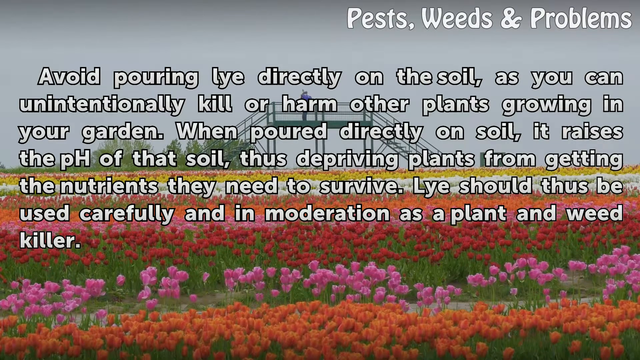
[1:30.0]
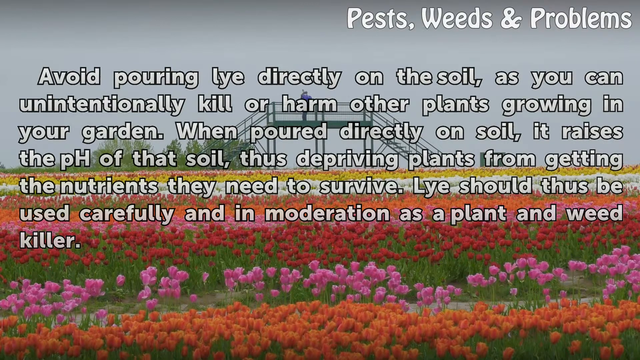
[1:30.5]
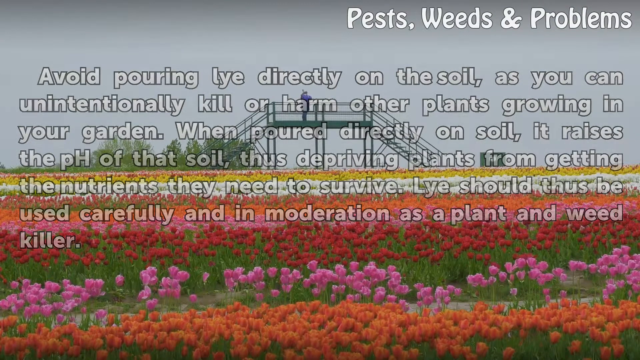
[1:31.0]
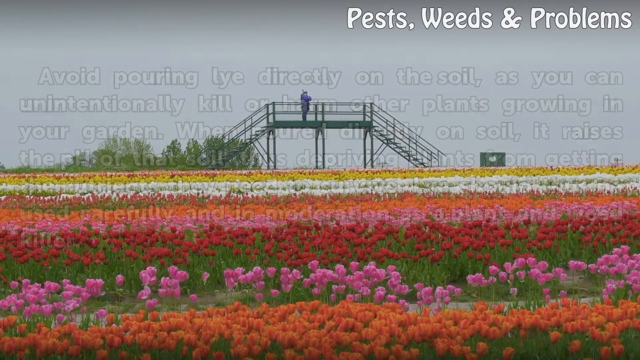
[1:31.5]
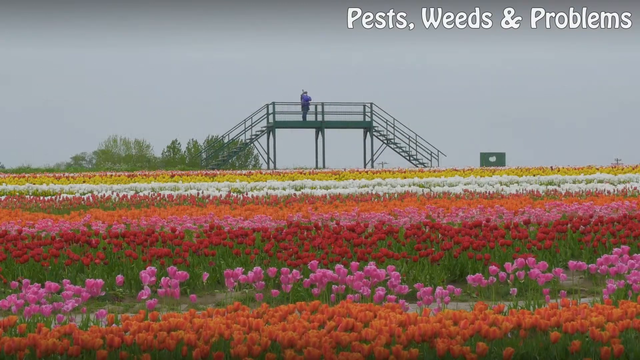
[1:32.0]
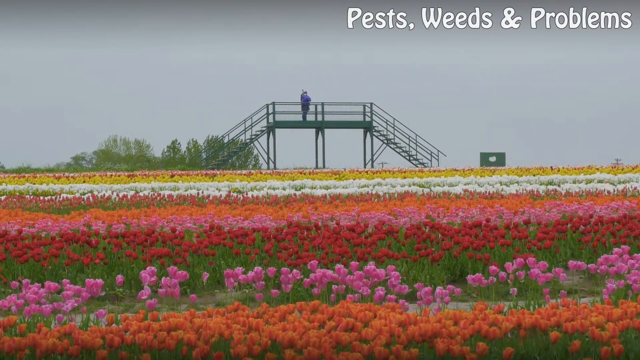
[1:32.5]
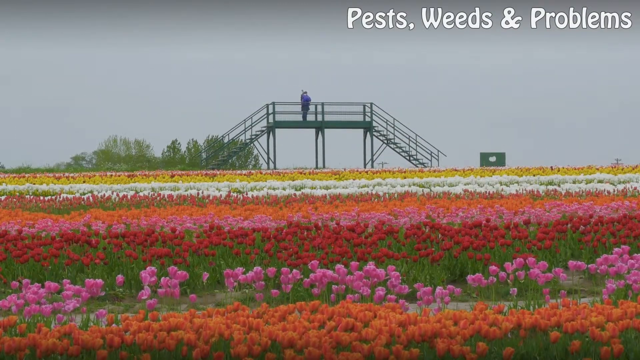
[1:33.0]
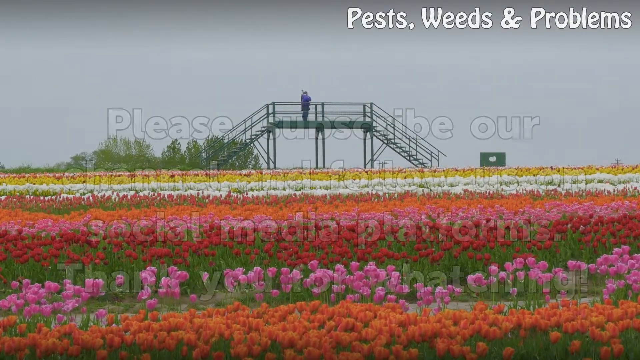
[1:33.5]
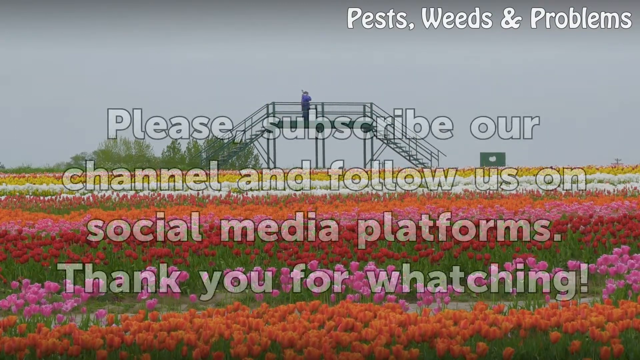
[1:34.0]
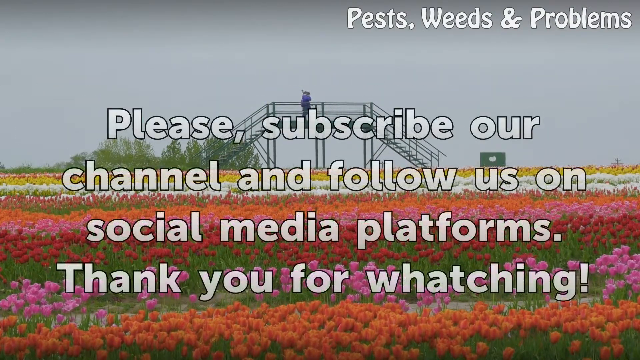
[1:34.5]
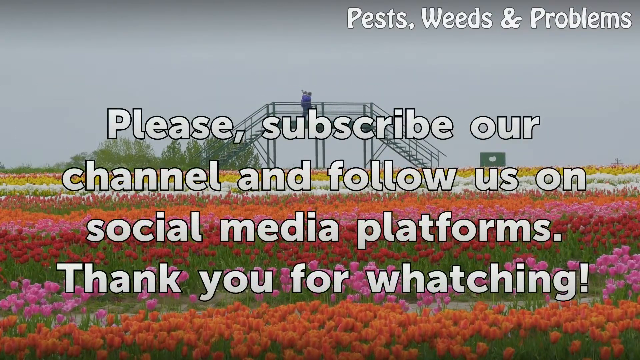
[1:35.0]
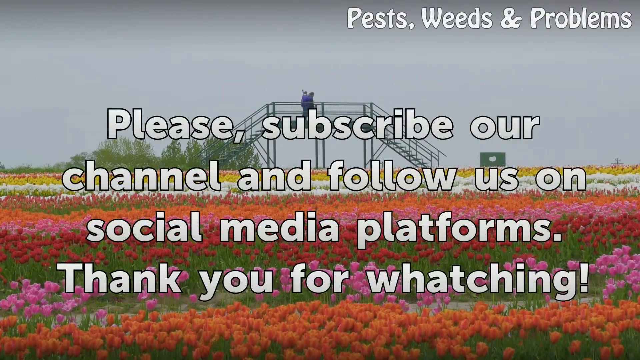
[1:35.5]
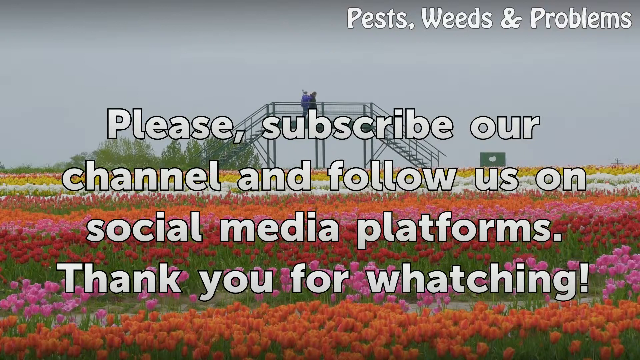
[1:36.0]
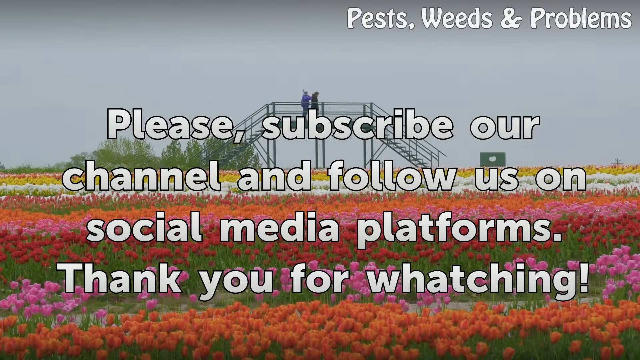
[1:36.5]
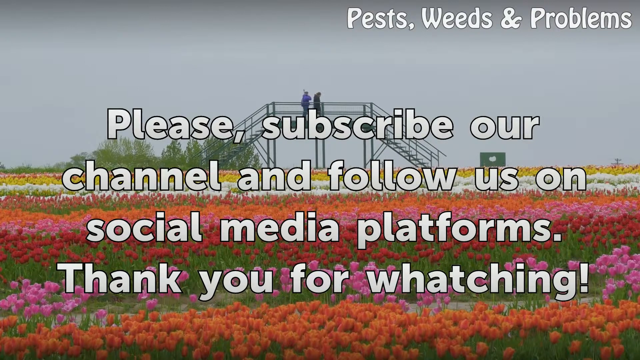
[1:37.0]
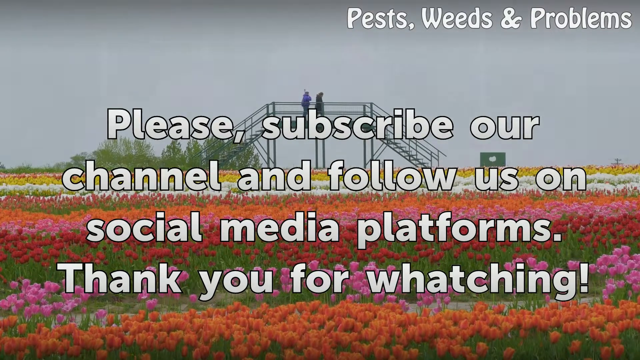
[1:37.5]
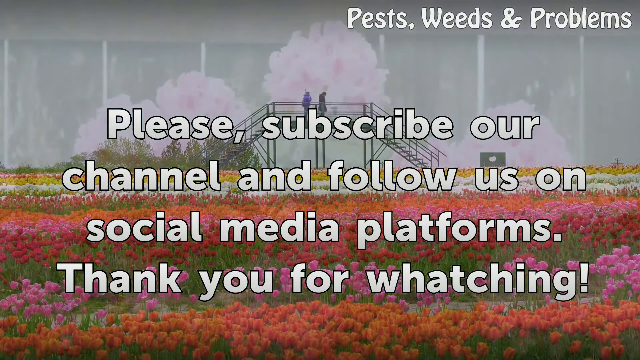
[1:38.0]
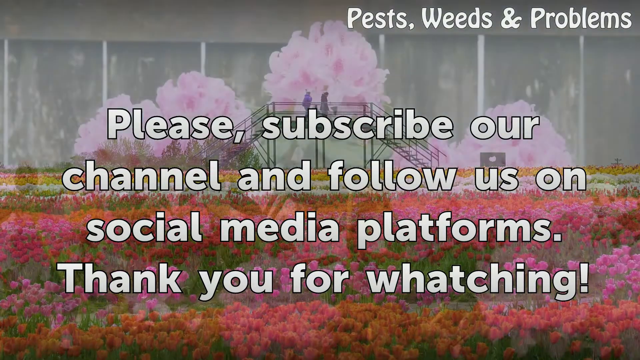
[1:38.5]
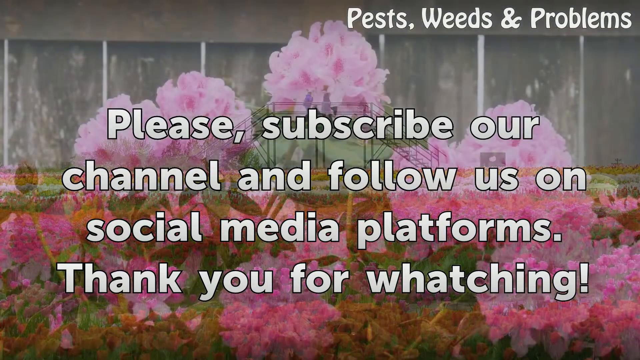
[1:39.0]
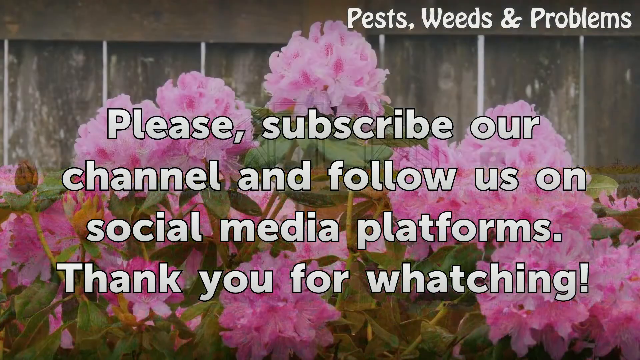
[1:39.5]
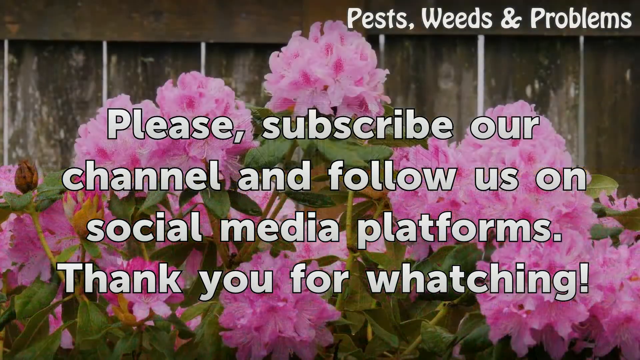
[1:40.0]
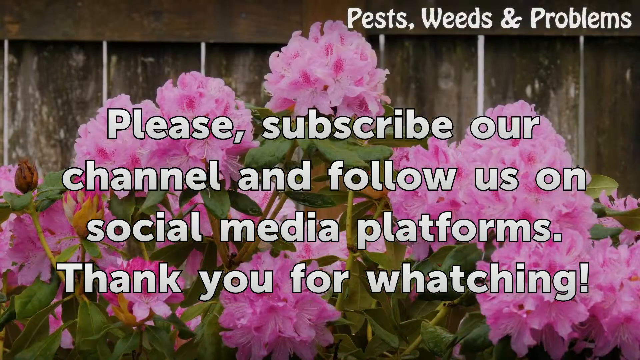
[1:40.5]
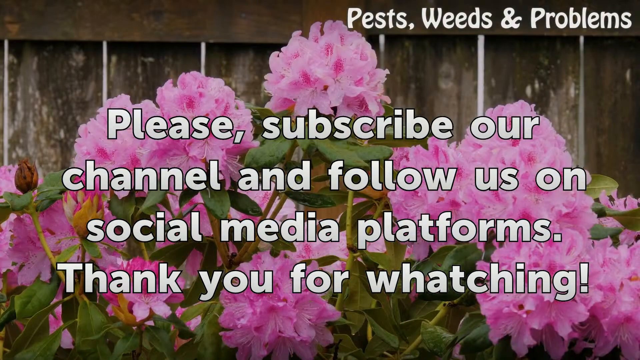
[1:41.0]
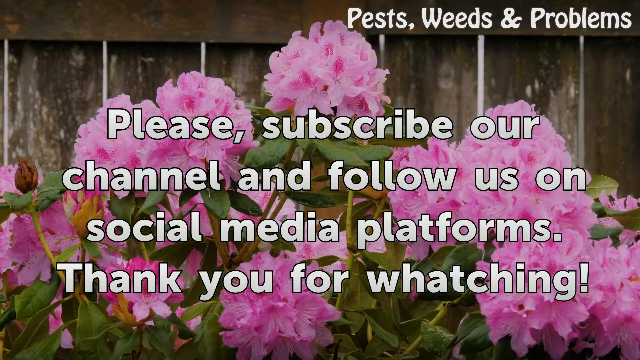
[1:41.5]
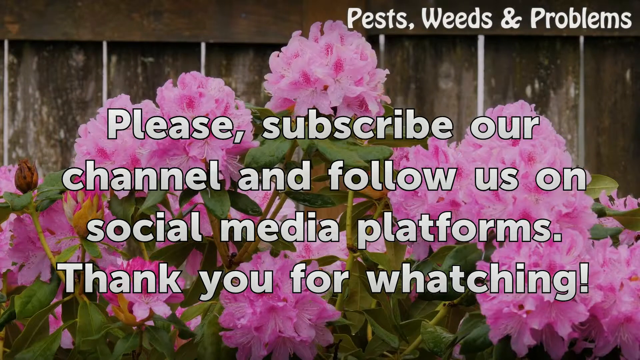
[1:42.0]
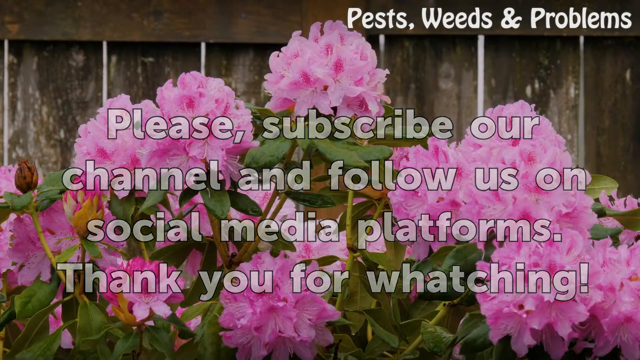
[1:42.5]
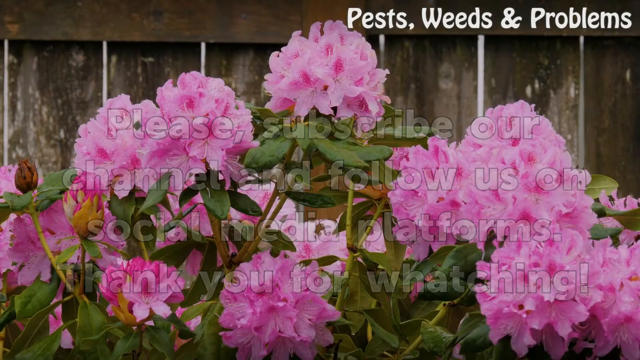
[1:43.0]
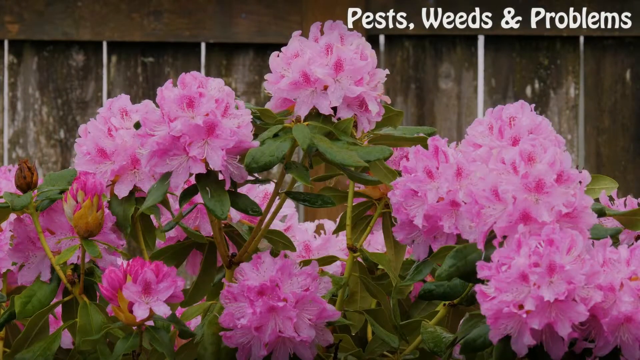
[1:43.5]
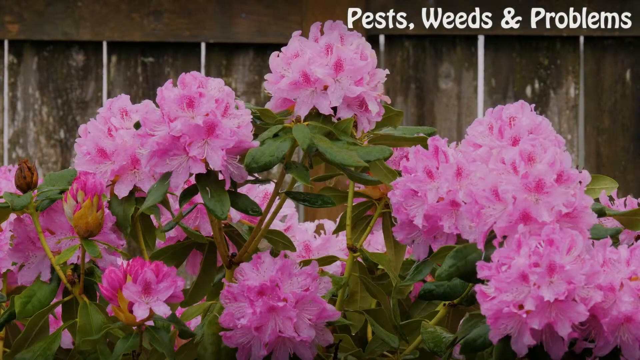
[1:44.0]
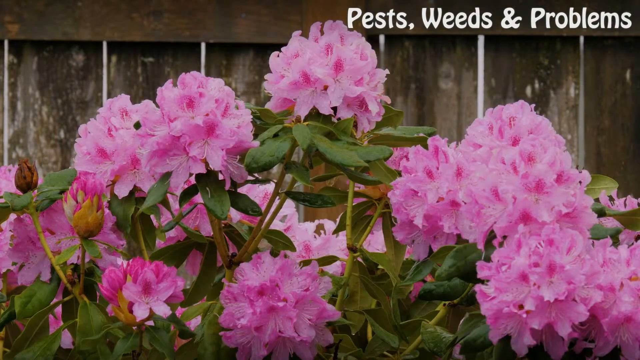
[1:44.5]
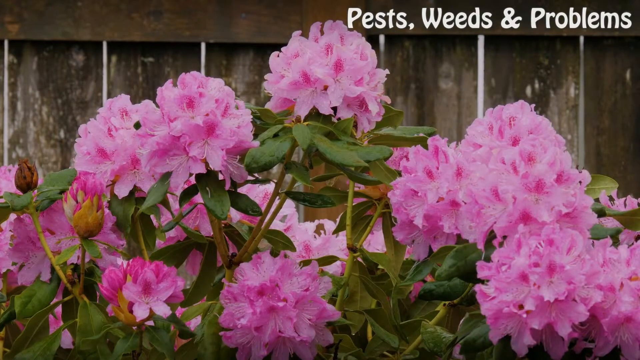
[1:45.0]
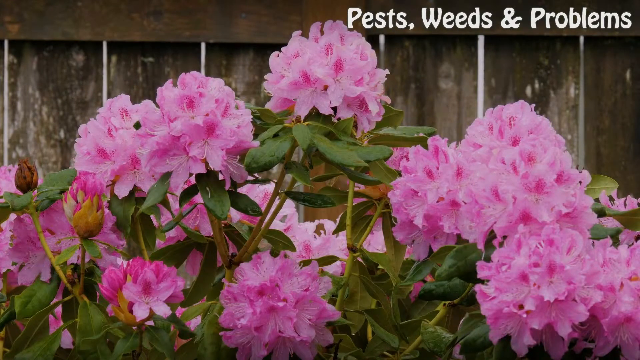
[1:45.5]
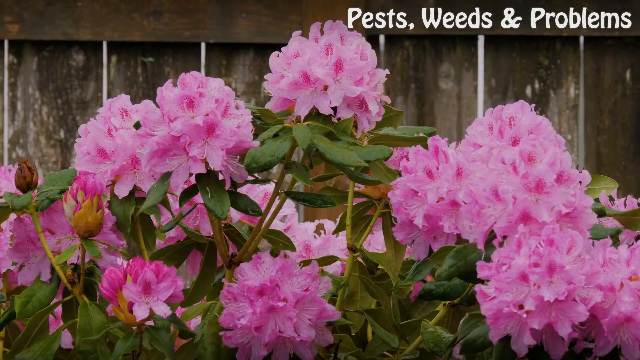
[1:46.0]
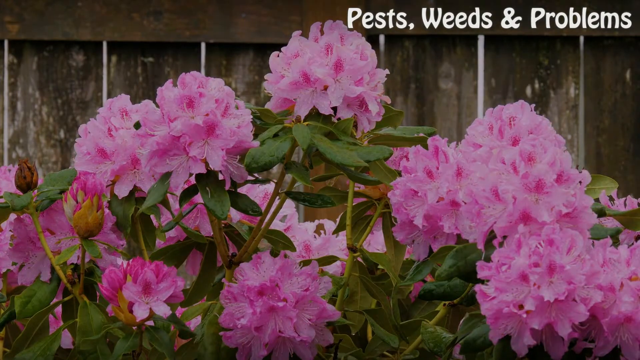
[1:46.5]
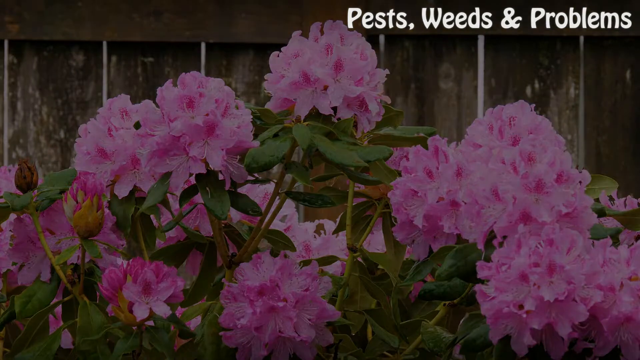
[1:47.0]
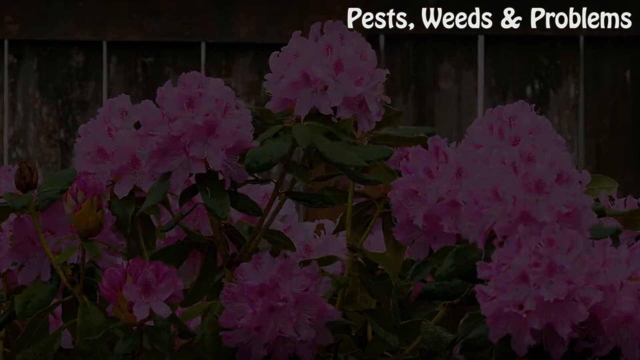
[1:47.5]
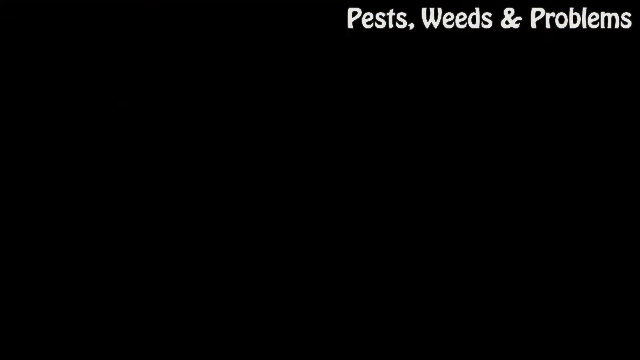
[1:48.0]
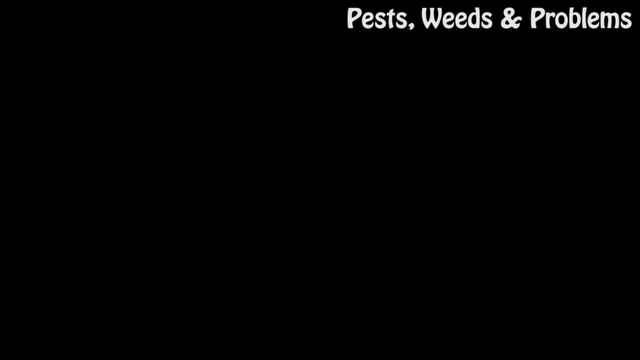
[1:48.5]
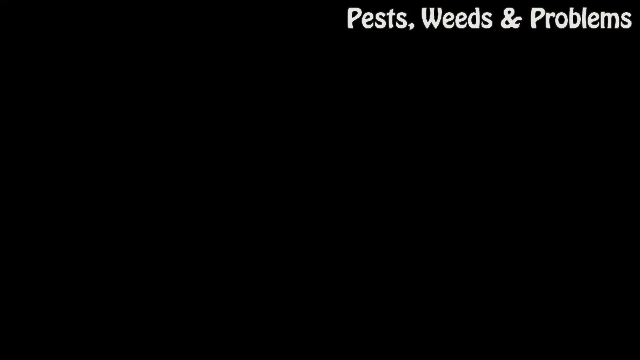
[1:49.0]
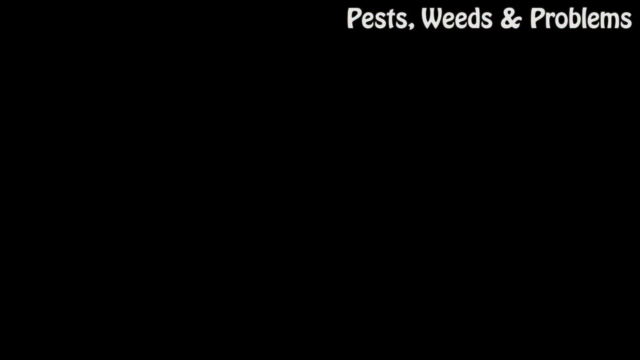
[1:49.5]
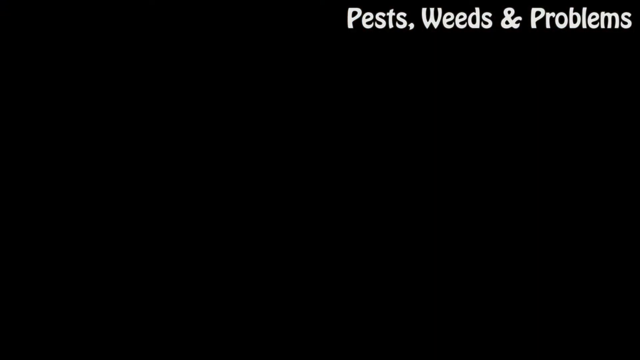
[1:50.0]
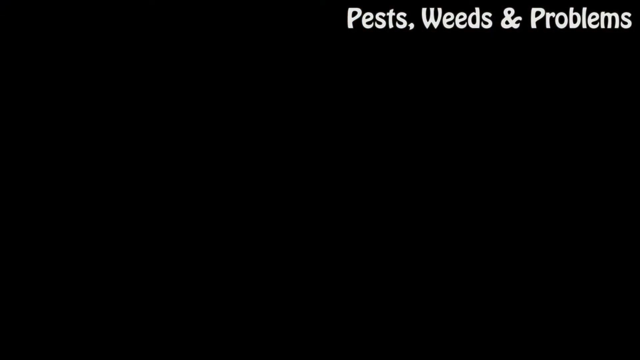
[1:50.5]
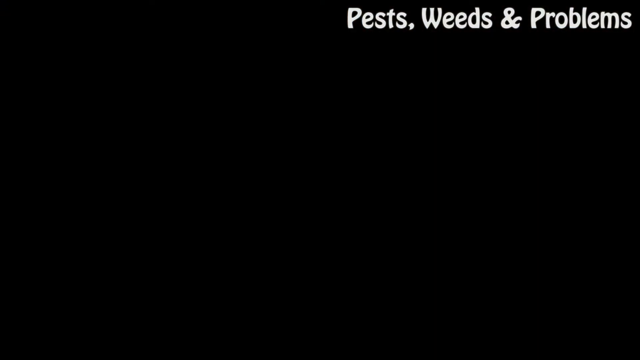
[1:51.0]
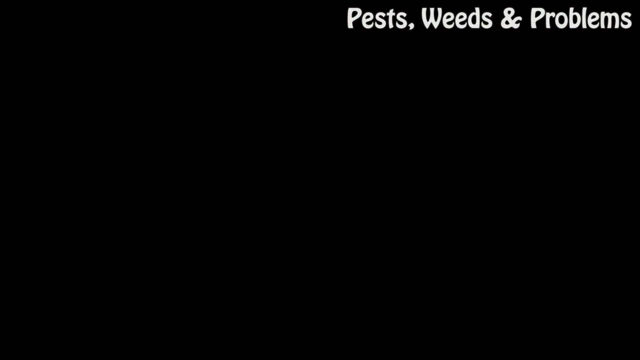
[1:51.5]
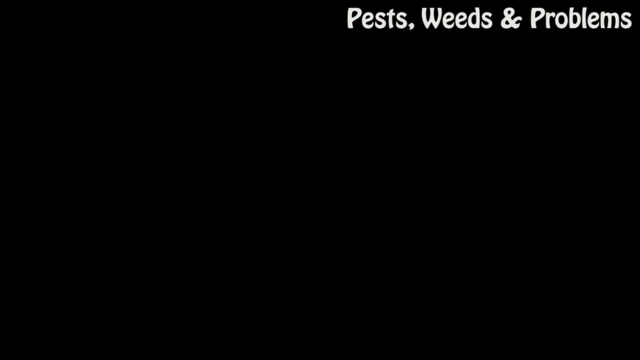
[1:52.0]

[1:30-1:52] The text fades away, leaving just the expansive flower field background with its rows of different colored flowers, an observation staircase and deck near the center at the back of the image, and a gray overcast sky. Block-letter text fades in and then out, reading "Please subscribe to our channel and follow us on social media platforms. Thank you for watching." The background then changes to pink hydrangeas with a wooden fence in the background, with the Pests, Weeds, and Problems logo still in the top right corner. The text fades away, leaving just the logo and the pink hydrangeas, before the screen fades to black with the logo still visible in the top right corner as the video ends.